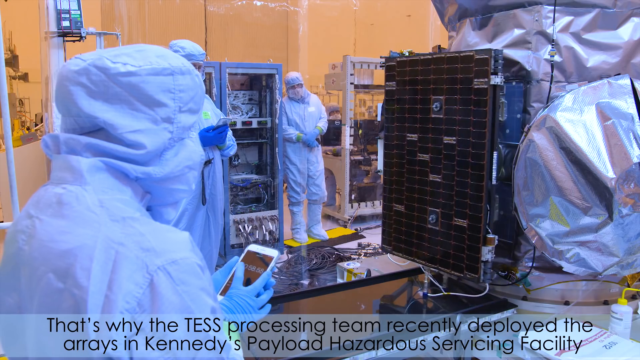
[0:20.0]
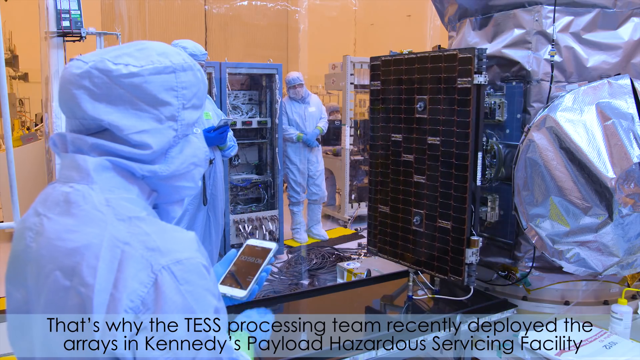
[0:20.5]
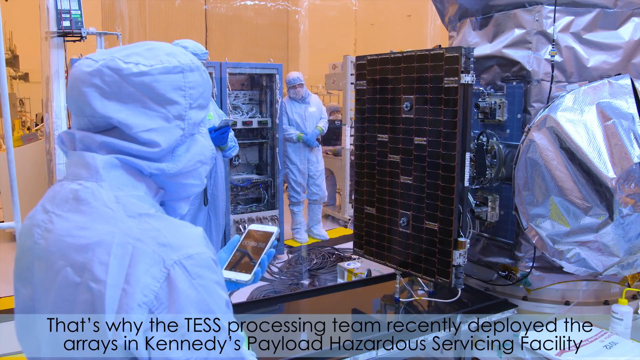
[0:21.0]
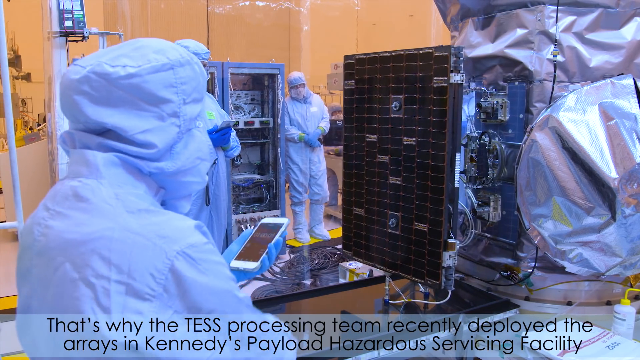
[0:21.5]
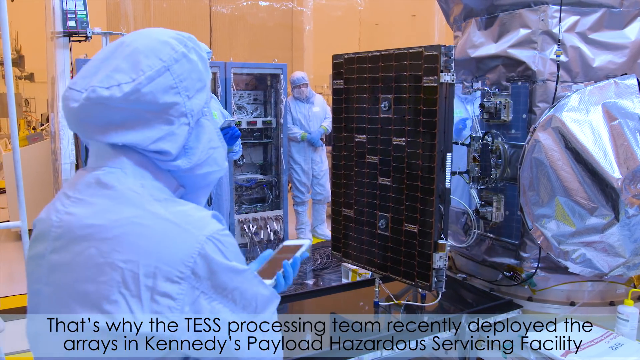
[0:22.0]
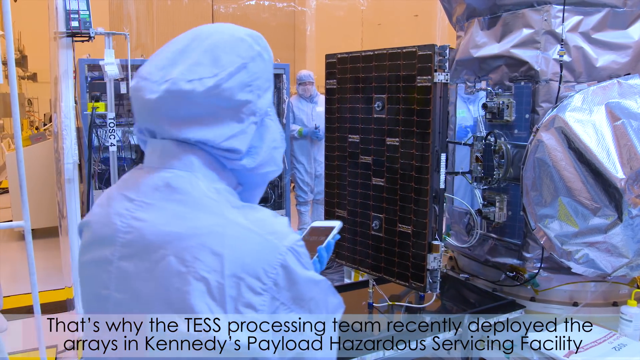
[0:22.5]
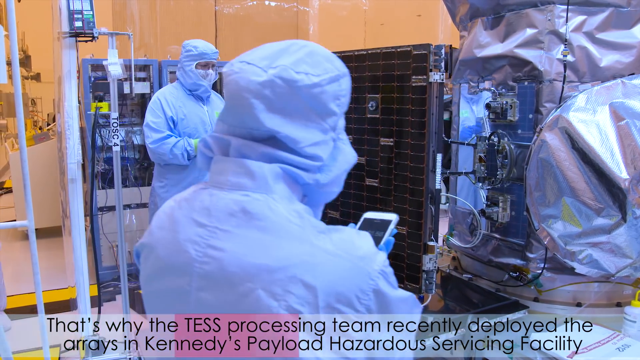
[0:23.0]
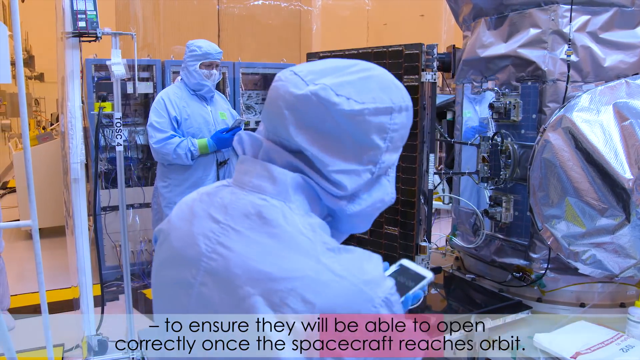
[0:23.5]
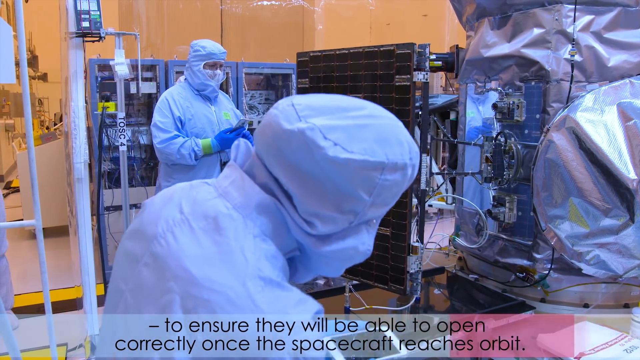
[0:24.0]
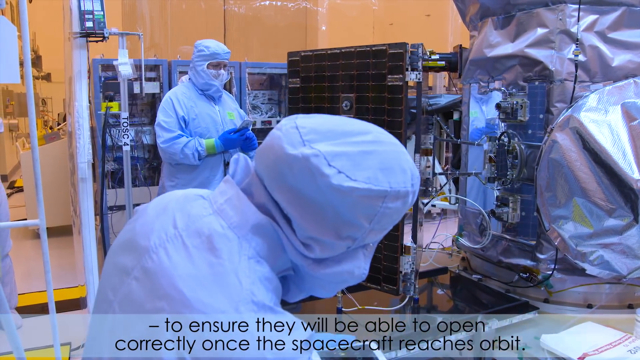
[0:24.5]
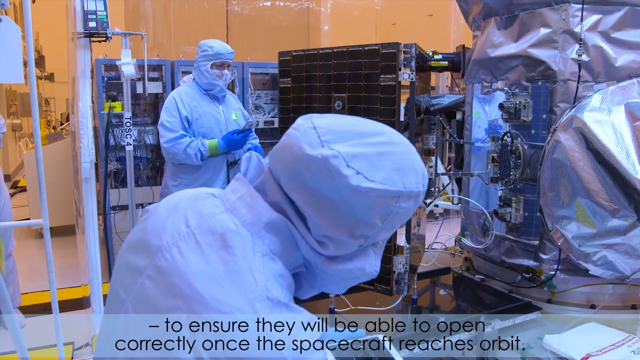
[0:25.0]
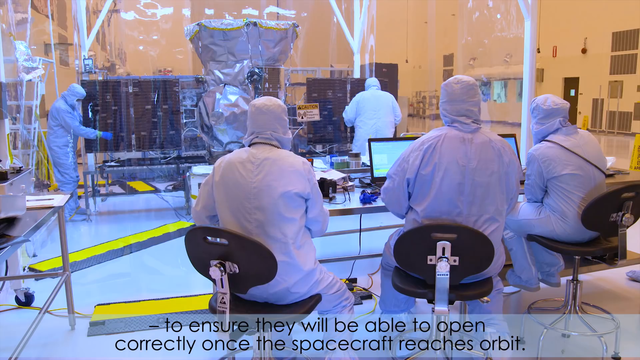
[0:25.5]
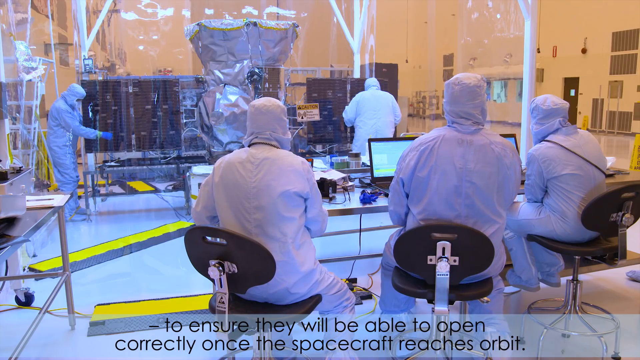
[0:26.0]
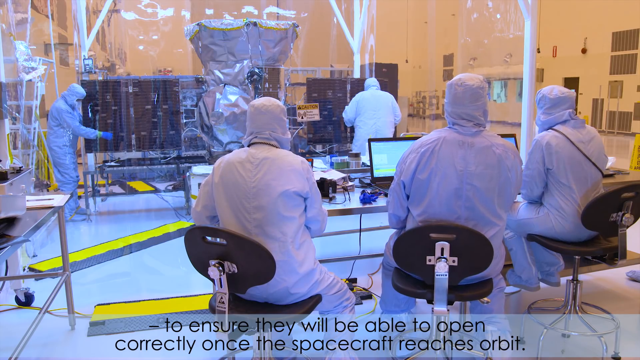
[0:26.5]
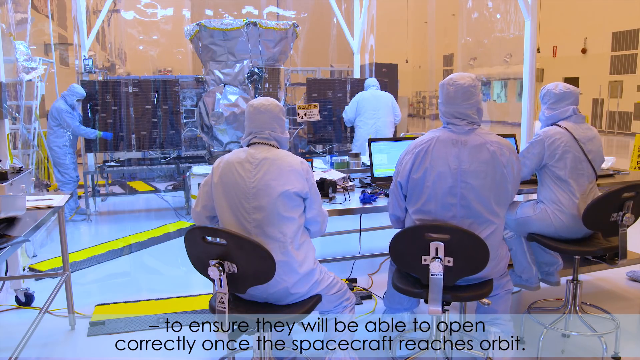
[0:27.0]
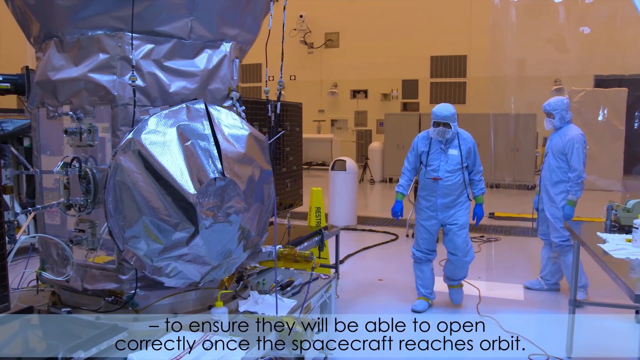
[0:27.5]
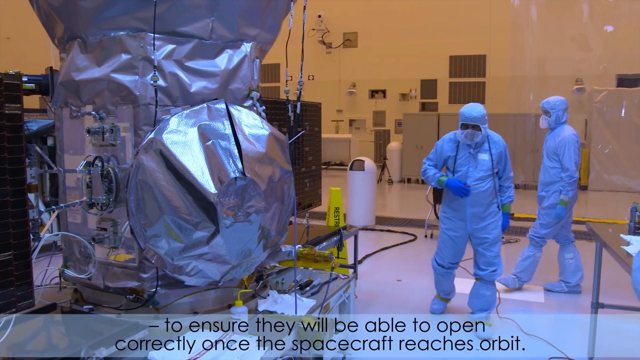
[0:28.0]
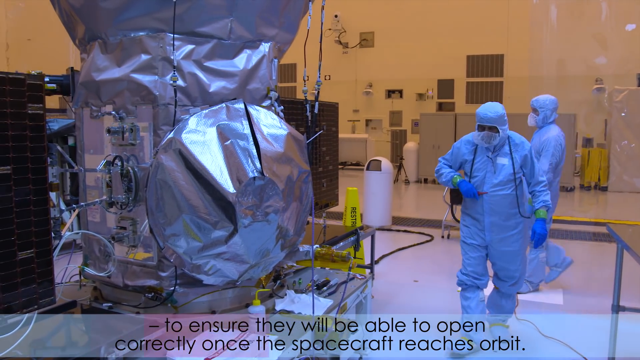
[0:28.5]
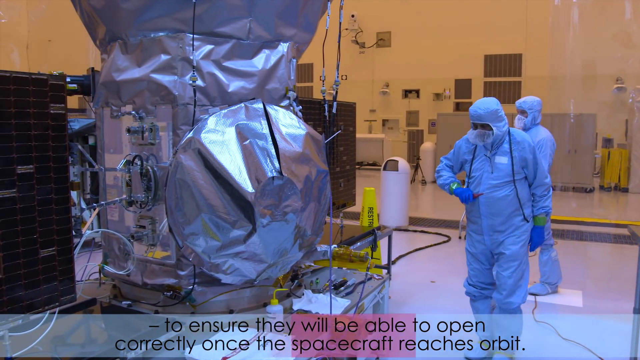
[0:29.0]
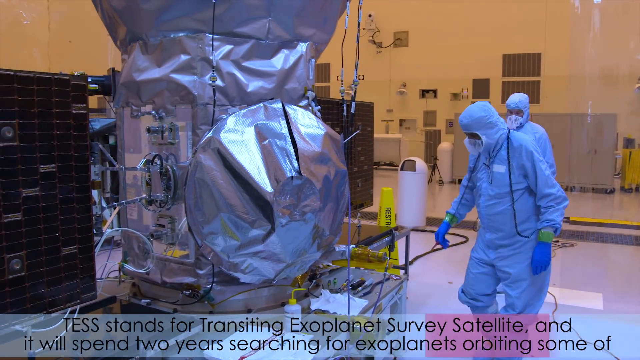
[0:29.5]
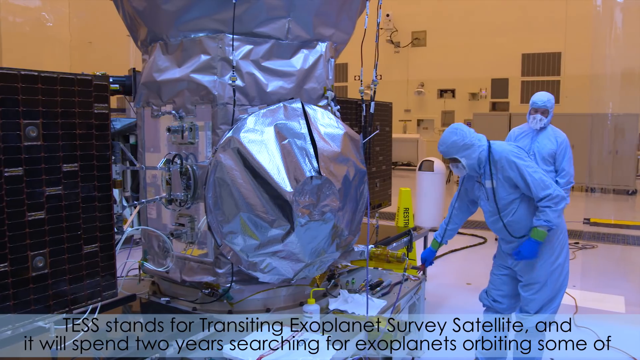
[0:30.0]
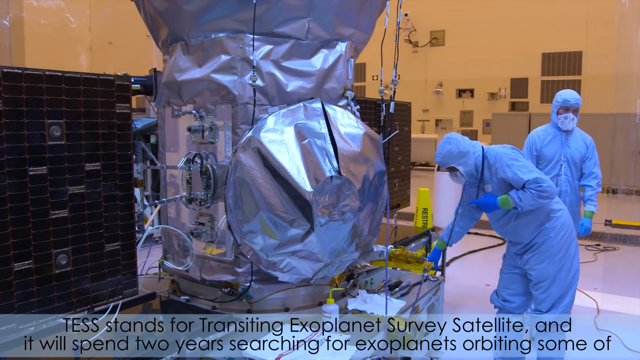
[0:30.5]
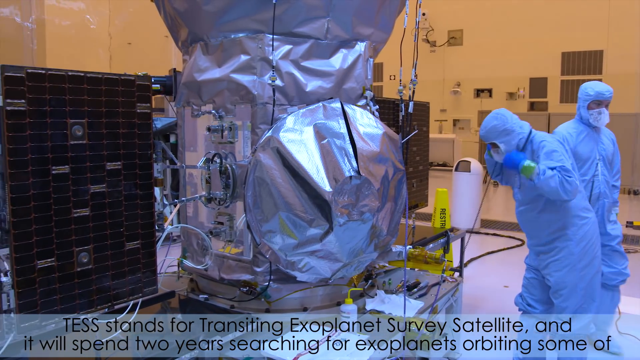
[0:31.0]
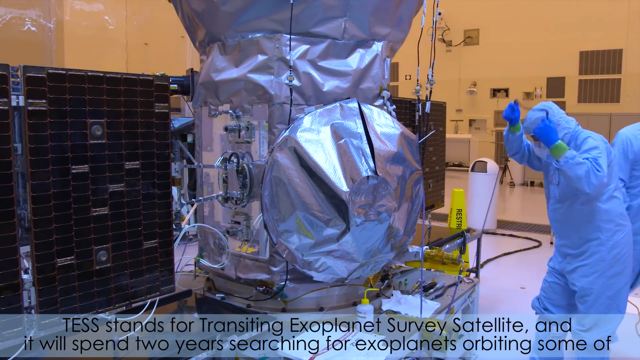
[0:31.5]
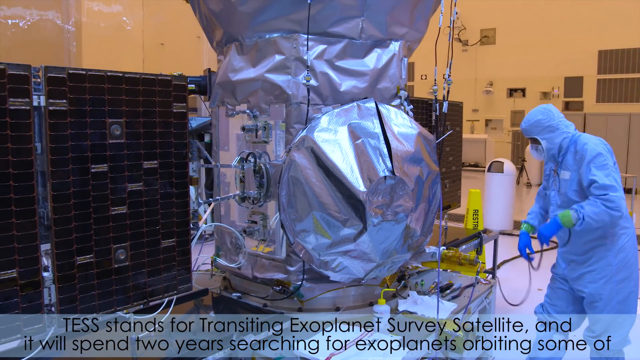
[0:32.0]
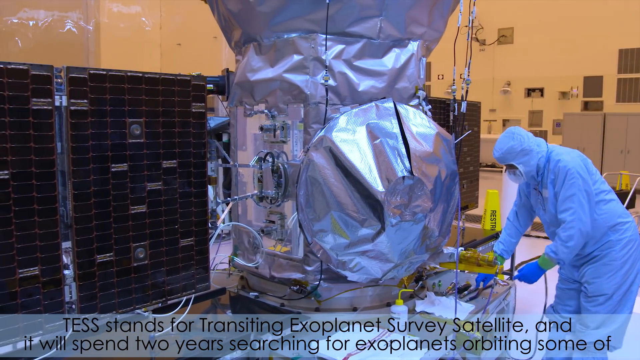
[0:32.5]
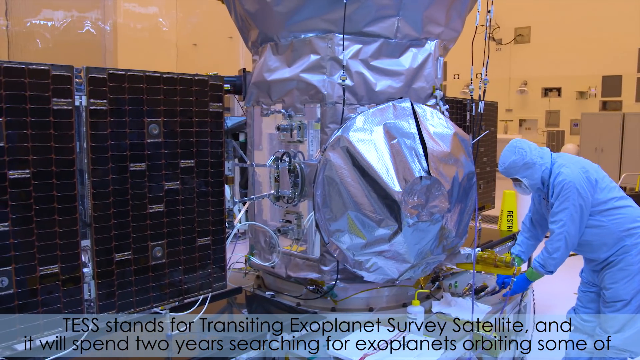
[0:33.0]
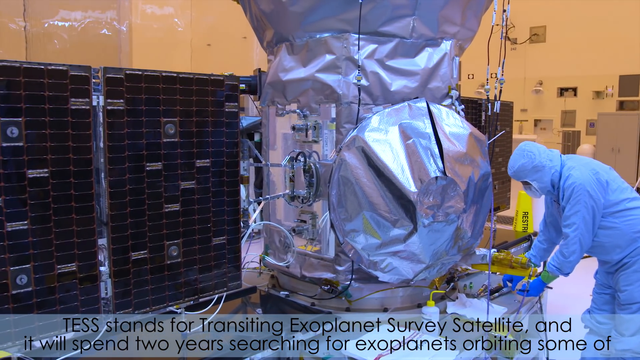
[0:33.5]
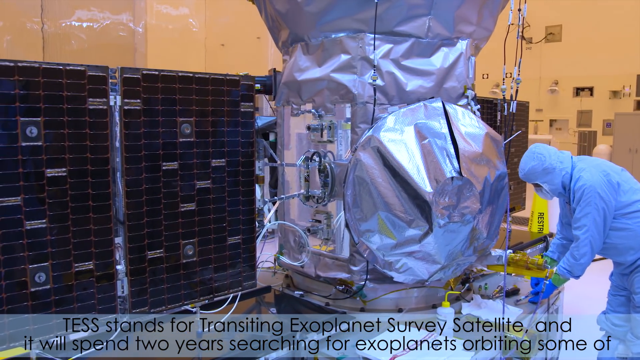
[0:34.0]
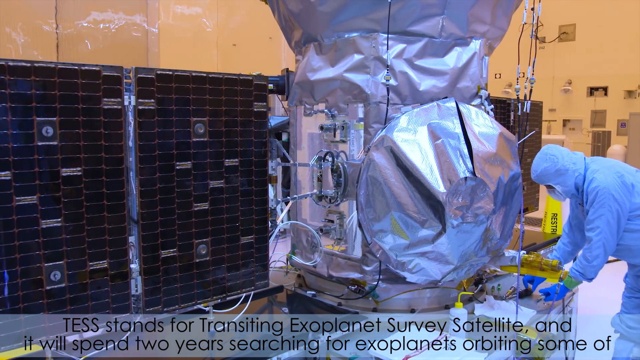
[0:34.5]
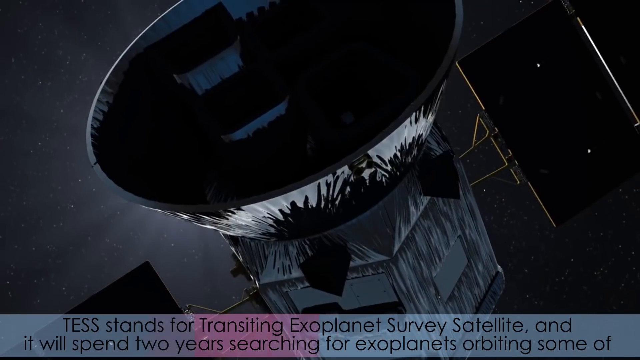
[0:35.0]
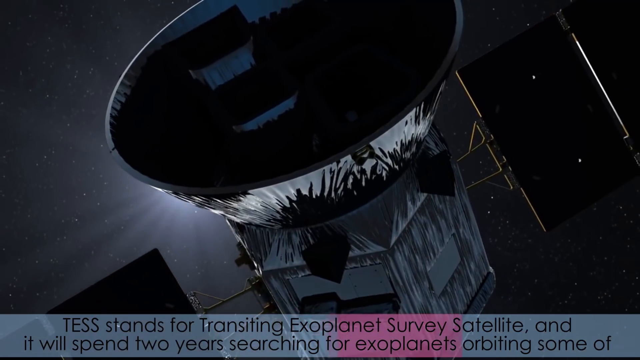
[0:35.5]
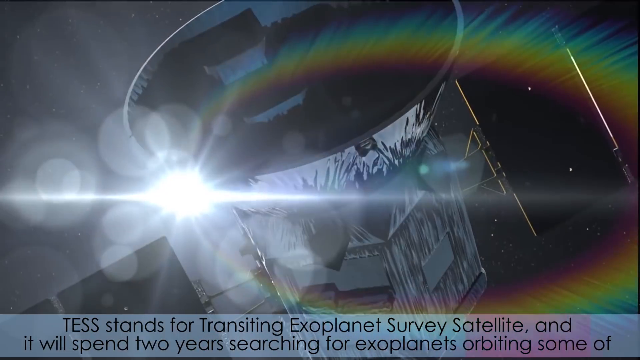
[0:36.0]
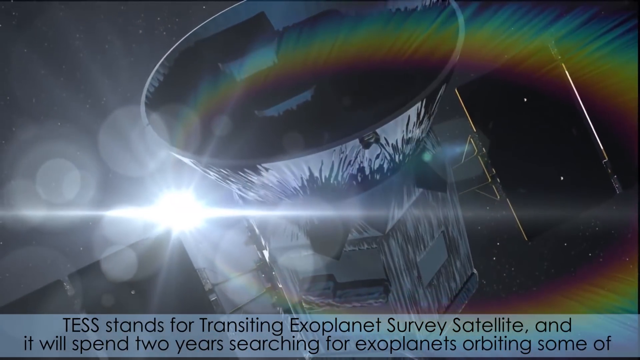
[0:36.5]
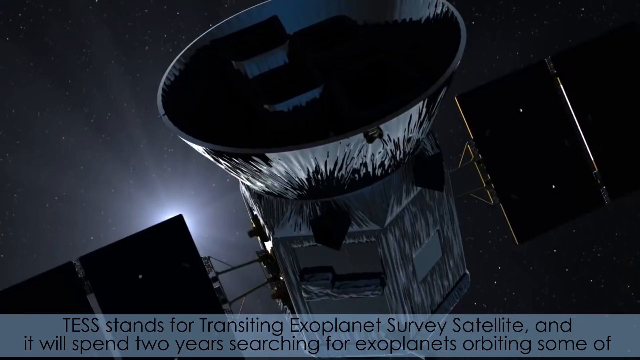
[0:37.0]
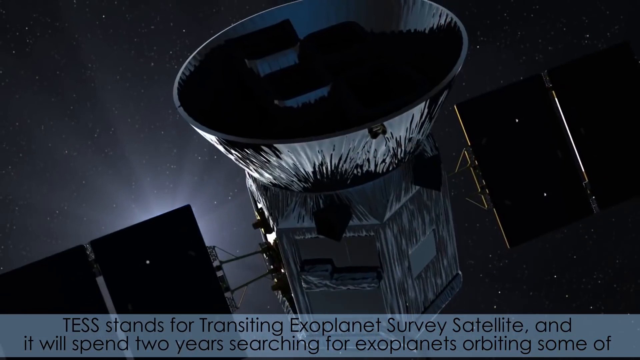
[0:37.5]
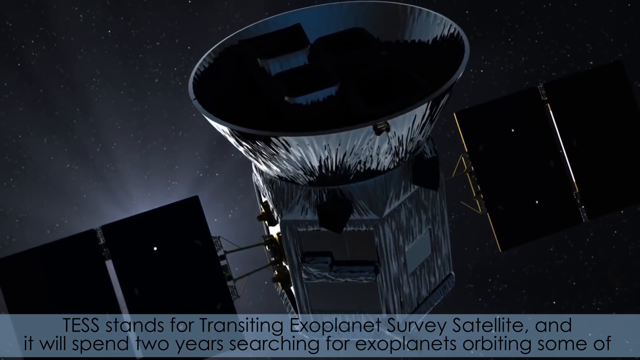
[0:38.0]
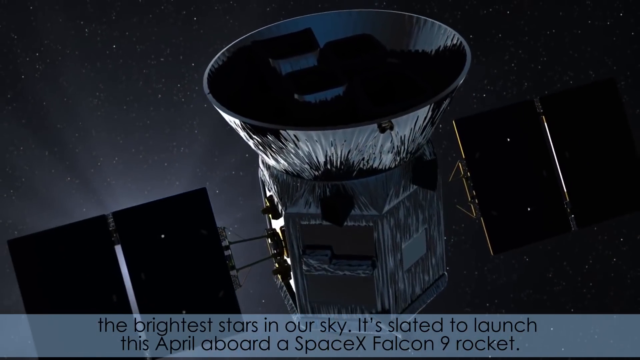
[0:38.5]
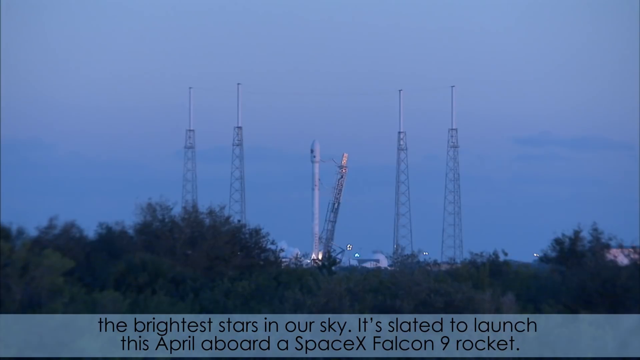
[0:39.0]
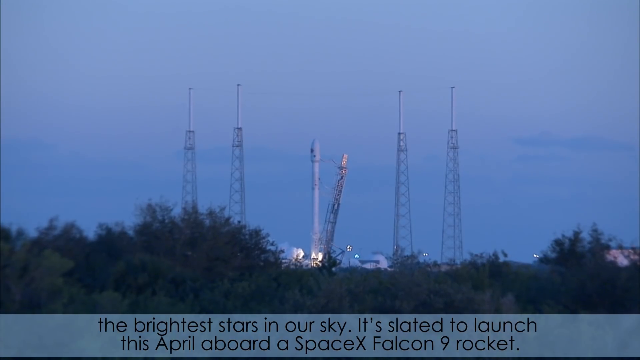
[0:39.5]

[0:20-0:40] What looks to be three scientists are positioned from the left of the screen to the center, wearing whitish-blue outfits that look like scrubs. After a cut, more of them appear, about five. Another cut shows two of them standing to the right, their faces covered with face masks, all wearing bright blue gloves. The outfits apparently protect them and keep them sanitary. All kinds of technology surround them, and they are often using personal devices such as laptops or cell phones to interact with large, almost robotic-type pieces of technology. The video then cuts to a digital image of a satellite again, followed by a sky landscape where a rocket looks like it is about to be deployed.